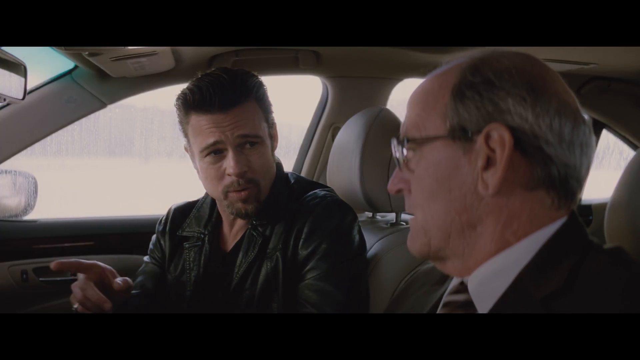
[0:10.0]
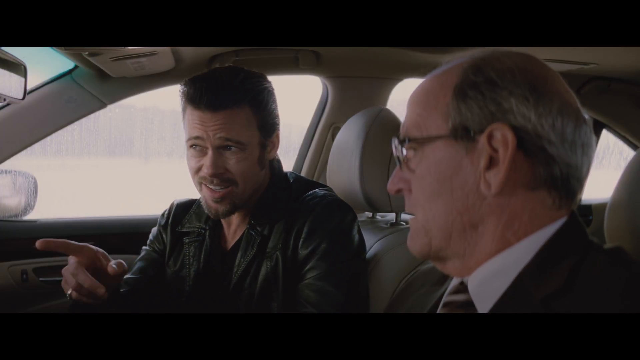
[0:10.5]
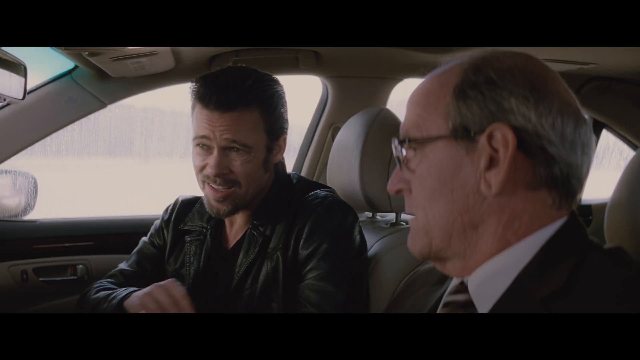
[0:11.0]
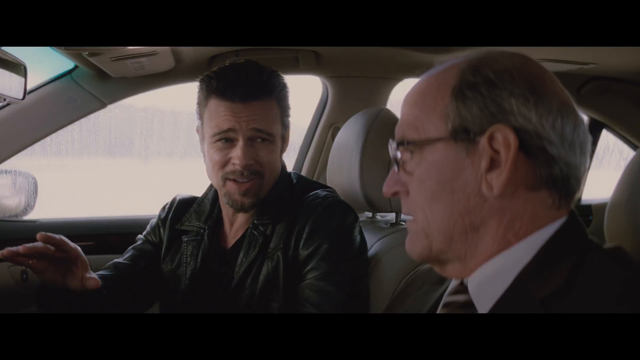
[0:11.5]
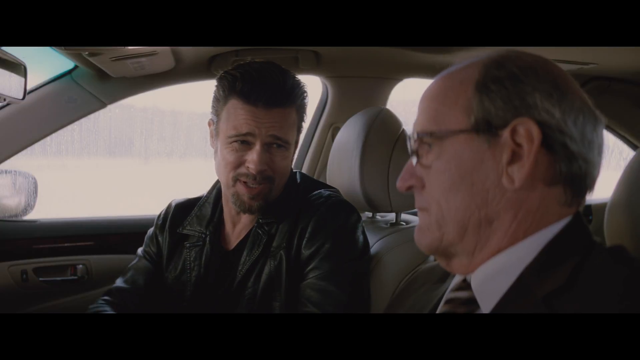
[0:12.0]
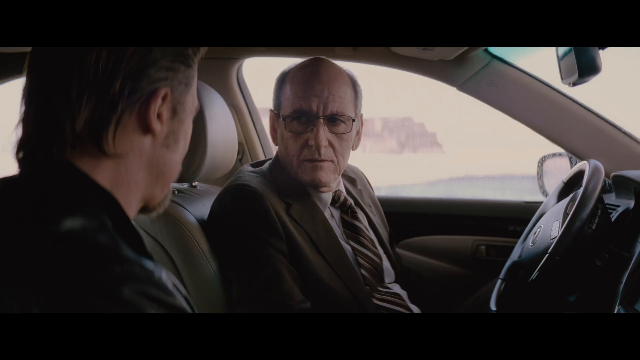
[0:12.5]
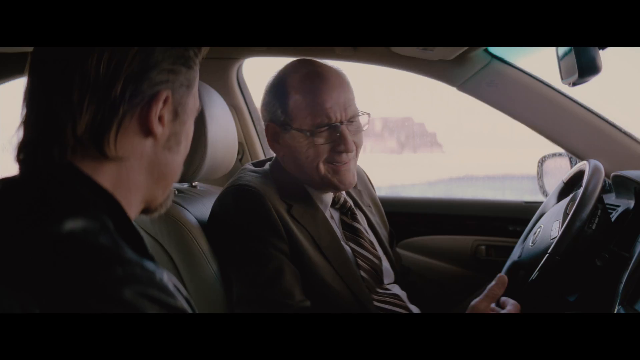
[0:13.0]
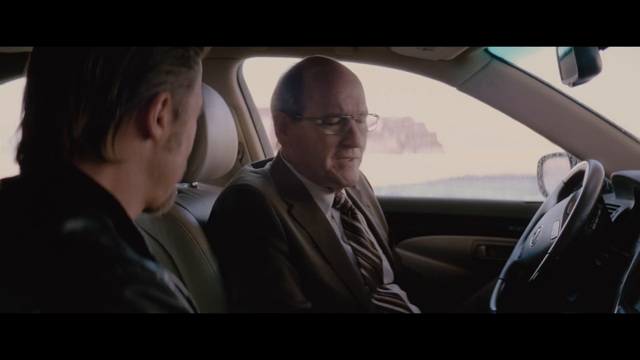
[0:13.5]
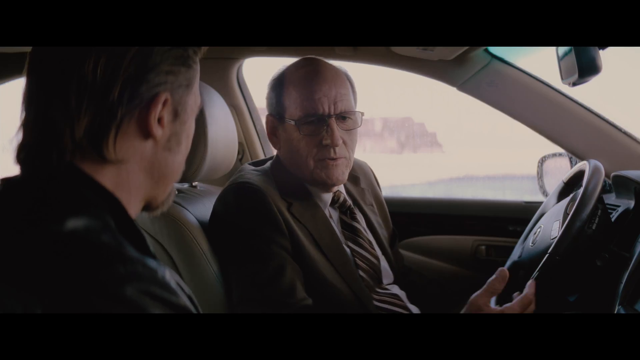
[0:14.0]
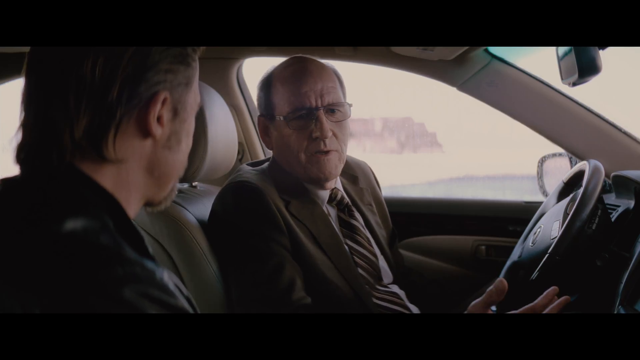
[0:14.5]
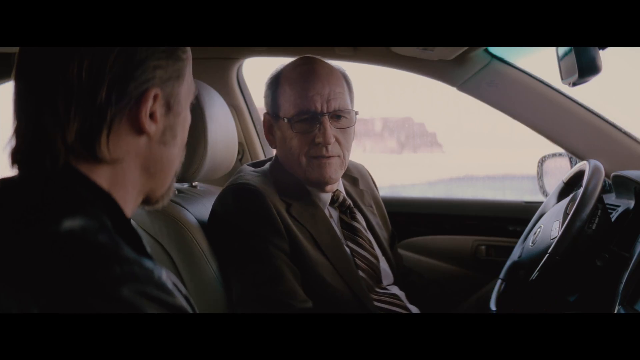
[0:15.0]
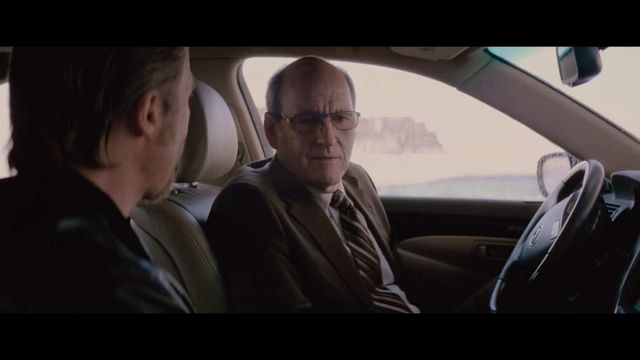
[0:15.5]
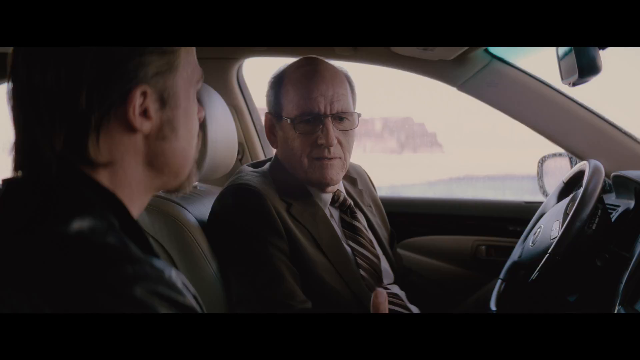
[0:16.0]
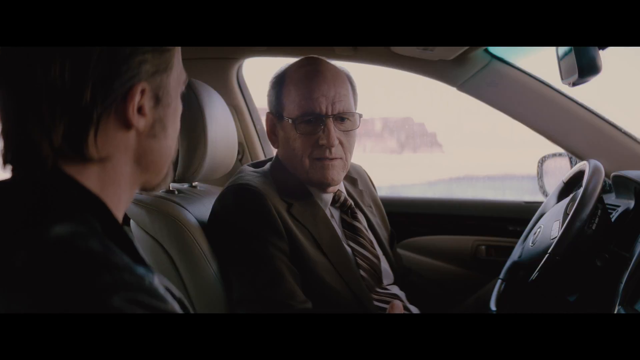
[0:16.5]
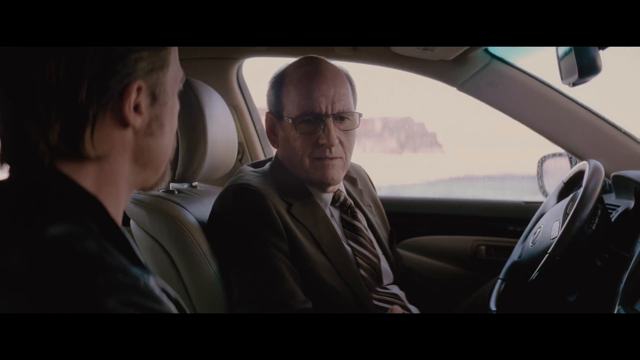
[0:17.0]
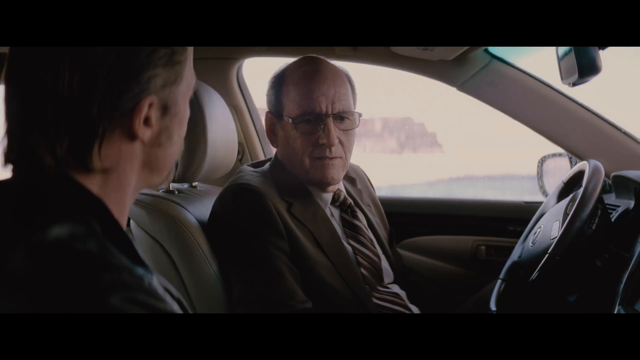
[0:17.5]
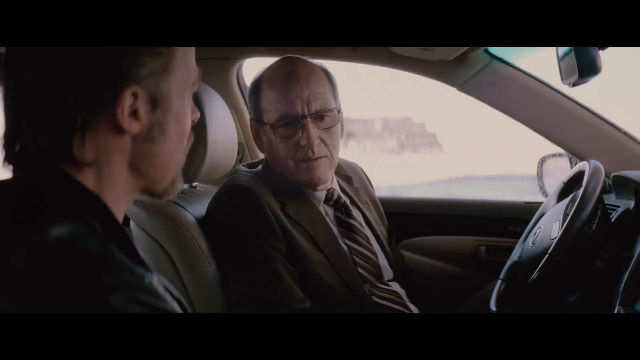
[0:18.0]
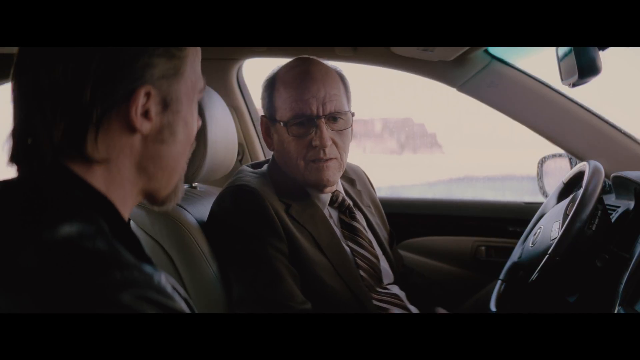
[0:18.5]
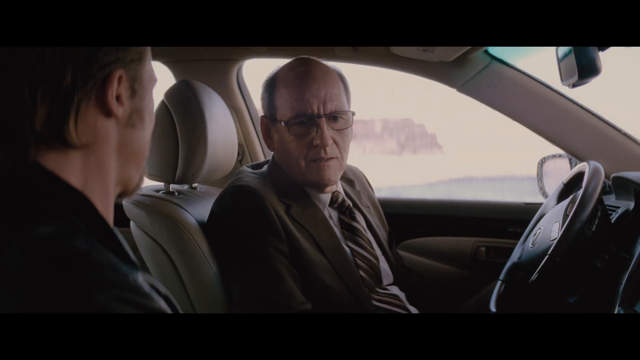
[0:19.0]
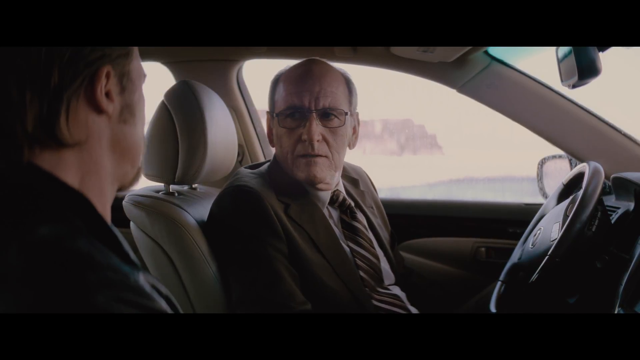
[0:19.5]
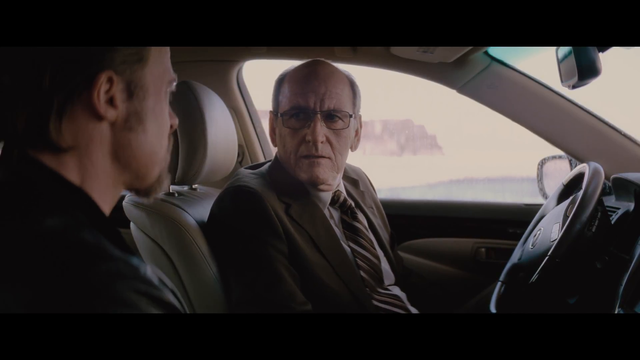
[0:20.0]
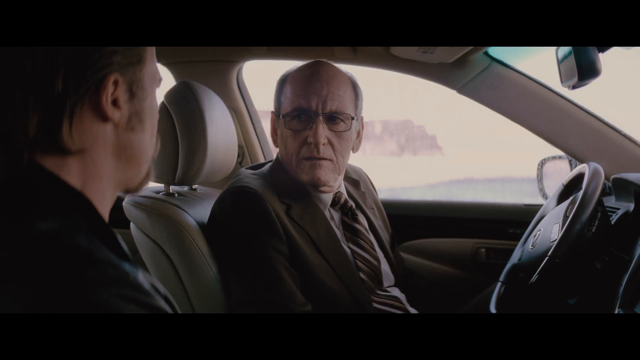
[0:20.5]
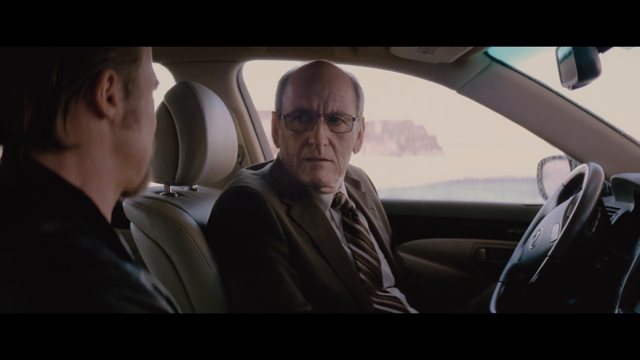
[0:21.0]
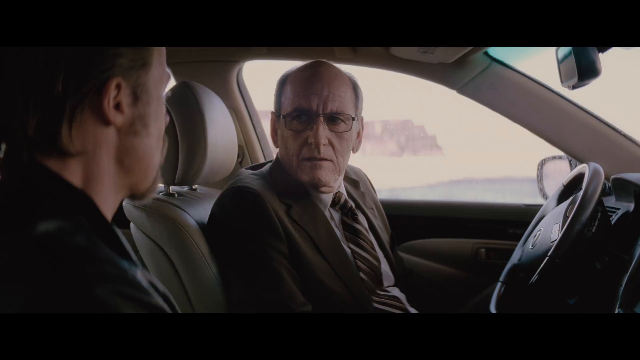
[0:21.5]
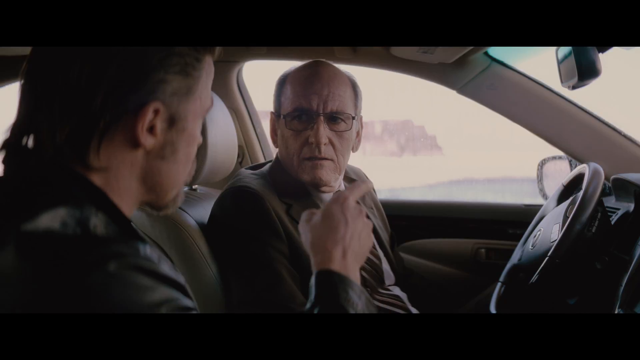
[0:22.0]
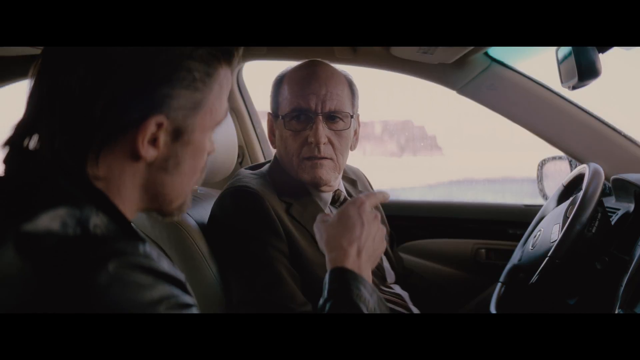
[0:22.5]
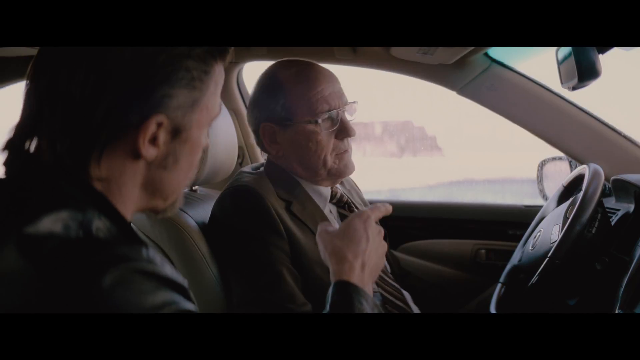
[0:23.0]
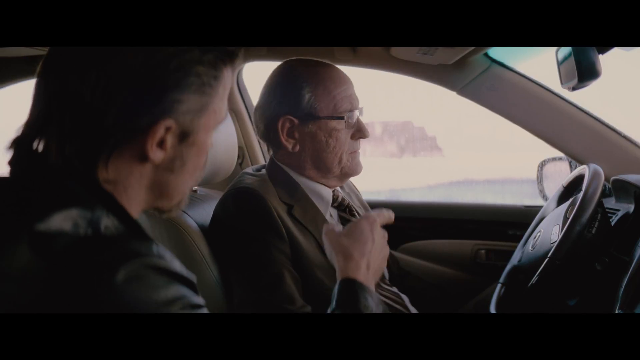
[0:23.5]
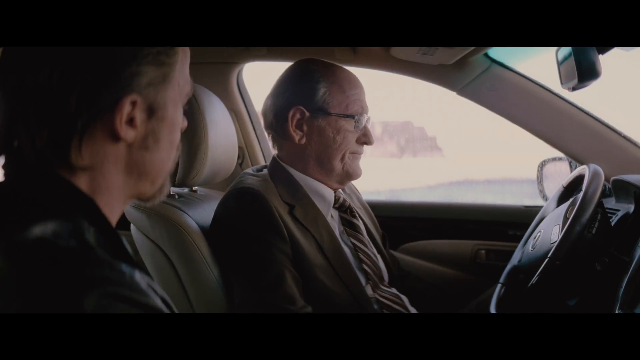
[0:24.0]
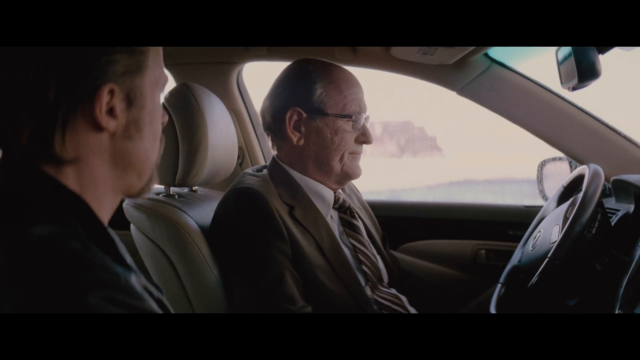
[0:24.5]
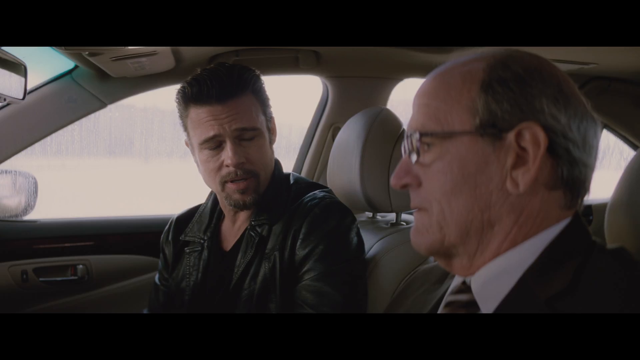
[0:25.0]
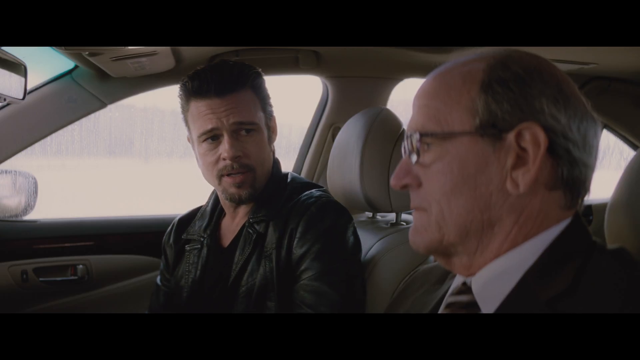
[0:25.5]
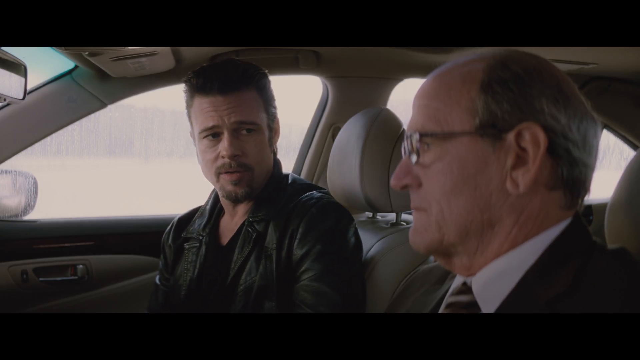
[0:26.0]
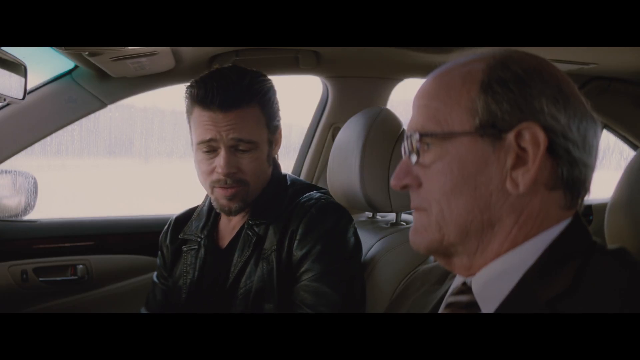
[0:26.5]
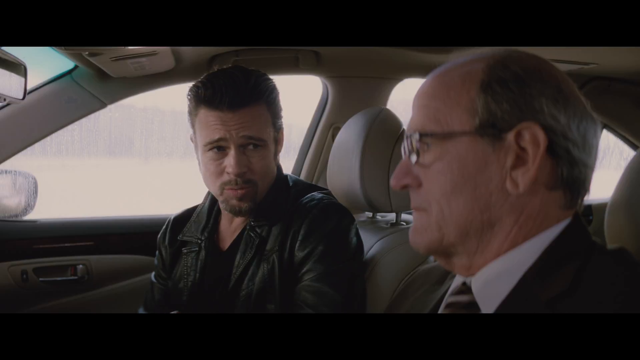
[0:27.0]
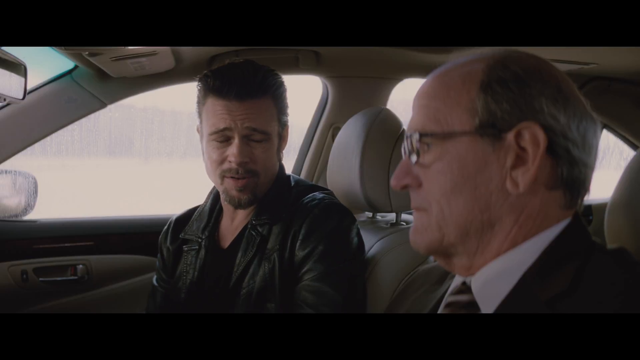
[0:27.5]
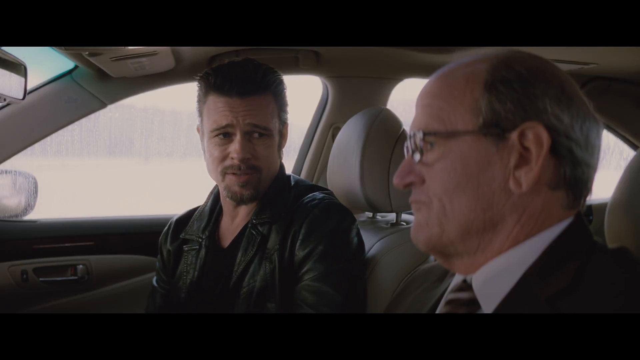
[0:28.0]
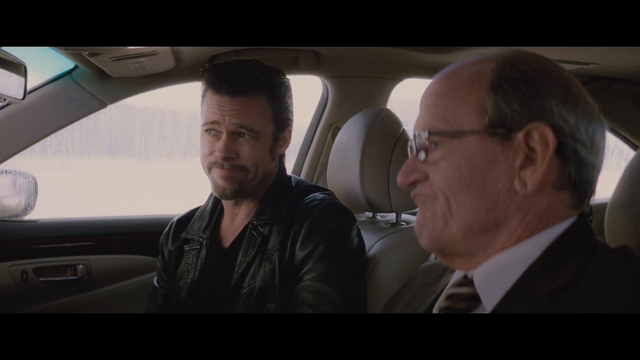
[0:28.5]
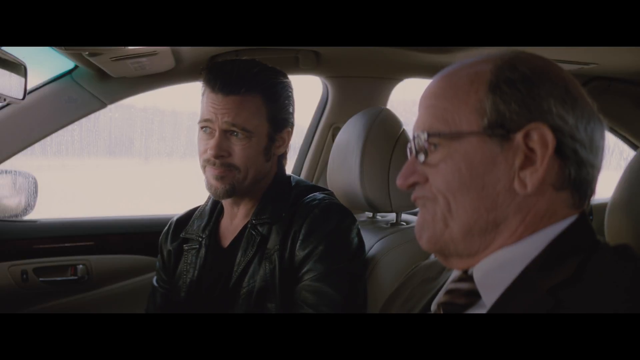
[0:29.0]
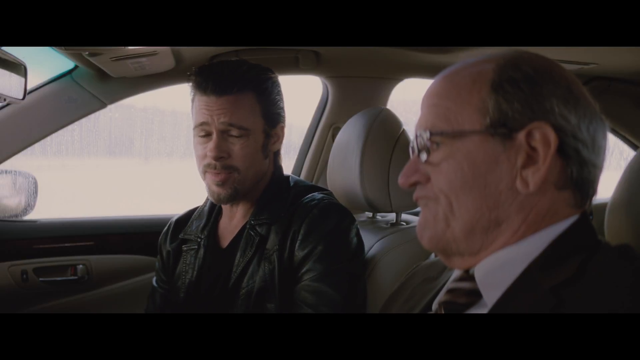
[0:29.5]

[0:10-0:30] Two men are in a car. On the left is Brad Pitt in a black, biker-style leather jacket, talking to an older man with glasses on the right, who is sort of looking out in front of him. Brad Pitt looks somewhat concerned and seems to be insisting on something. The man sort of shrugs, and the wheel is in front of him. The shot changes to the older man, who sort of shakes his head. Brad Pitt gestures with his hand, seemingly continuing to insist, then points out the window, roughly toward where the mirror is outside the window. The older man looks somewhat upset, and Brad Pitt keeps looking at him, also seeming upset. The car's interior is a beige-like color, the rear view window is in the upper left-hand corner, and outside is very white and blown out, so the background is hard to see.